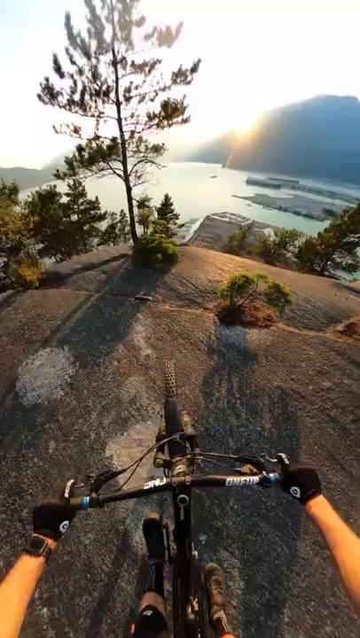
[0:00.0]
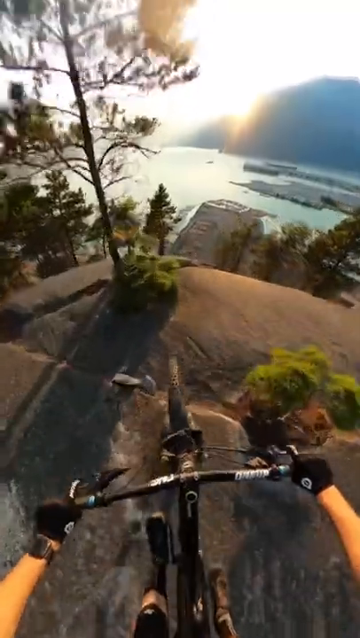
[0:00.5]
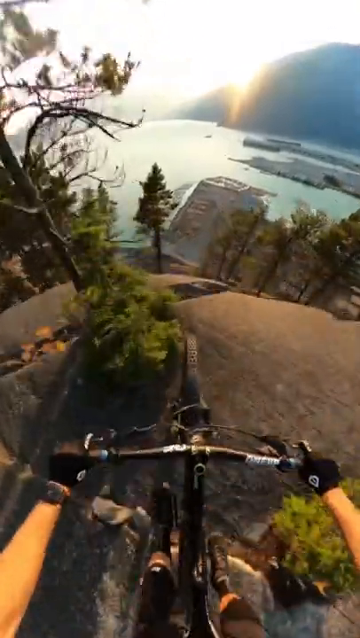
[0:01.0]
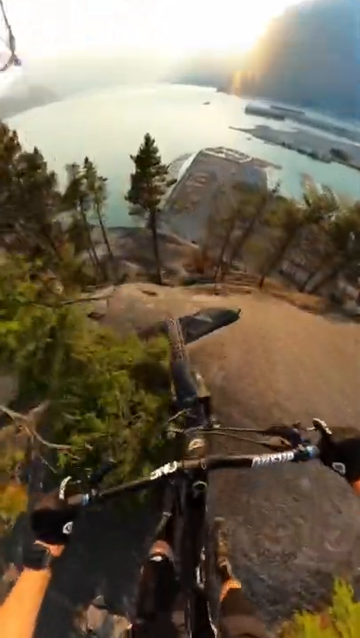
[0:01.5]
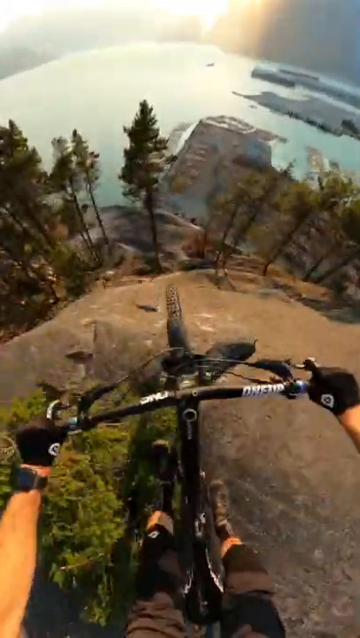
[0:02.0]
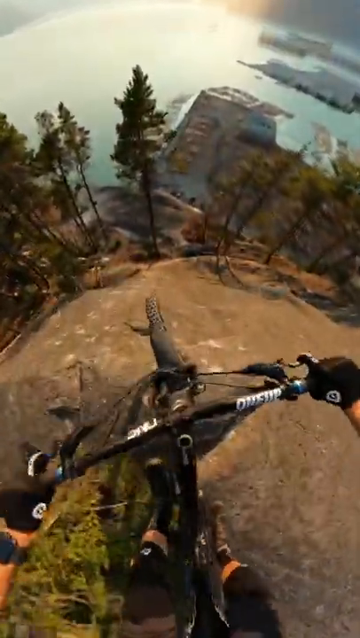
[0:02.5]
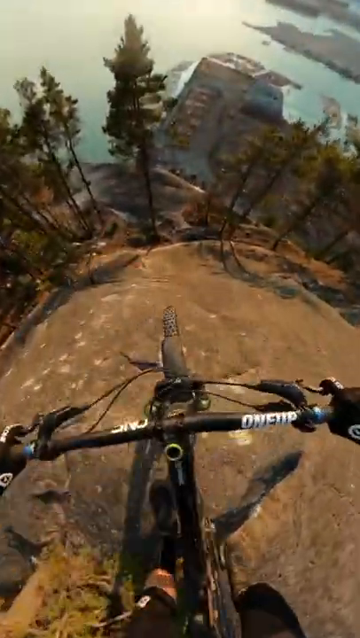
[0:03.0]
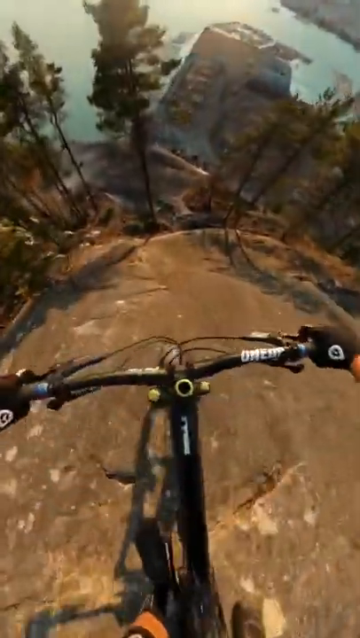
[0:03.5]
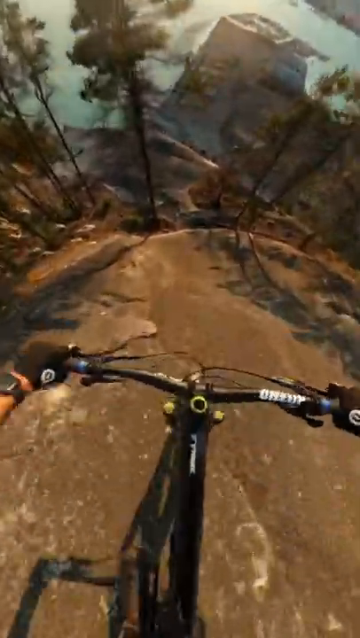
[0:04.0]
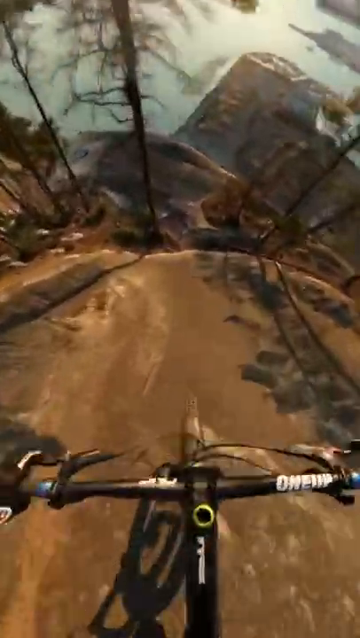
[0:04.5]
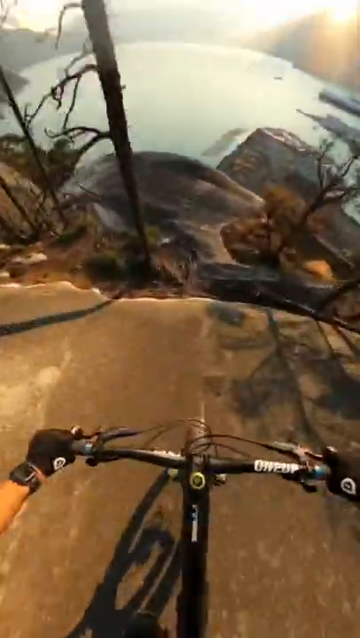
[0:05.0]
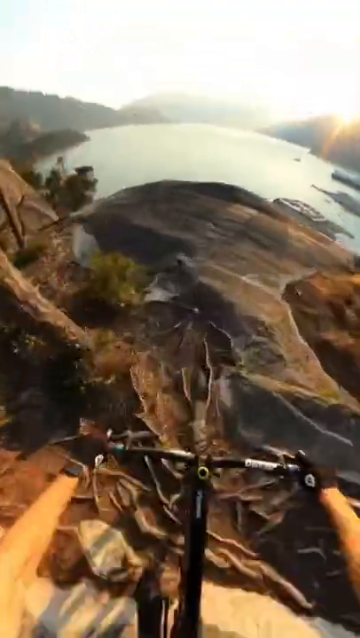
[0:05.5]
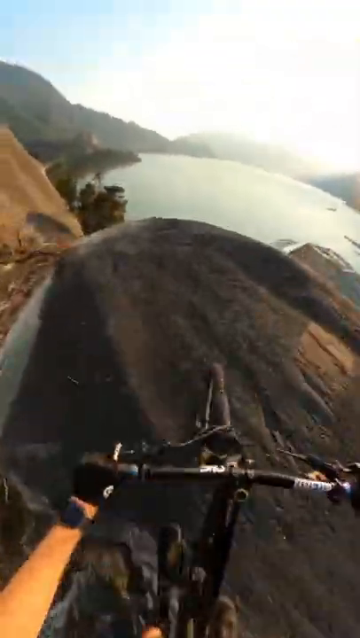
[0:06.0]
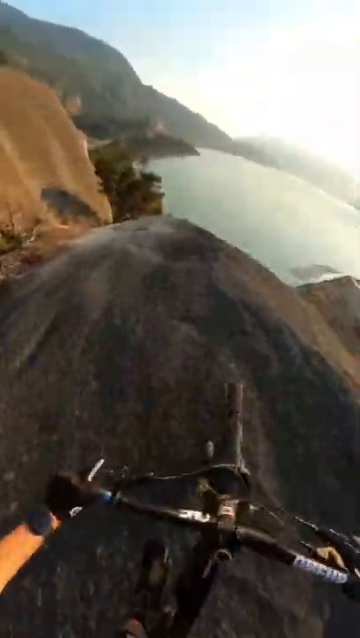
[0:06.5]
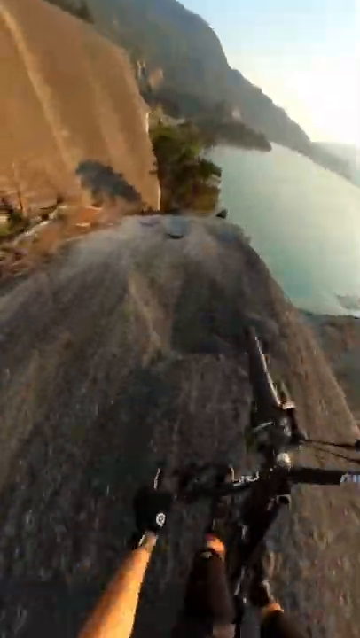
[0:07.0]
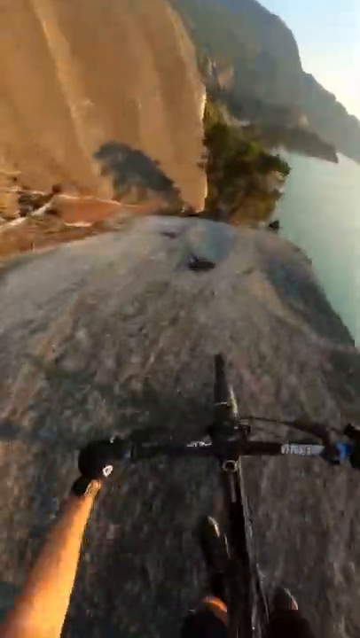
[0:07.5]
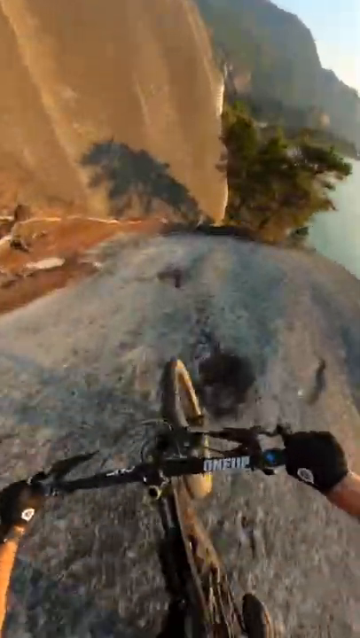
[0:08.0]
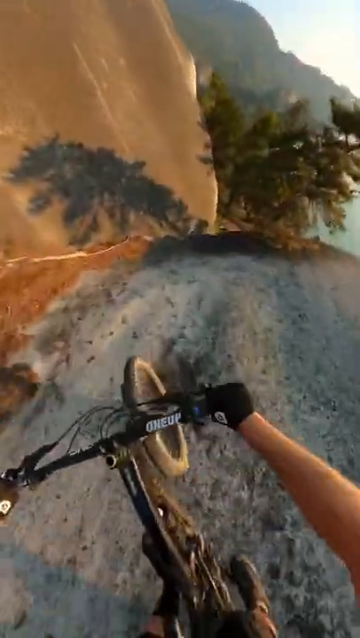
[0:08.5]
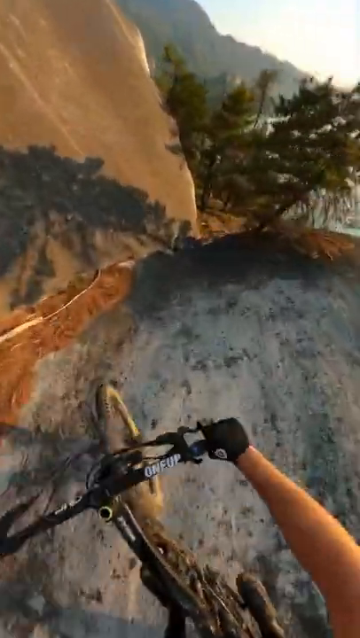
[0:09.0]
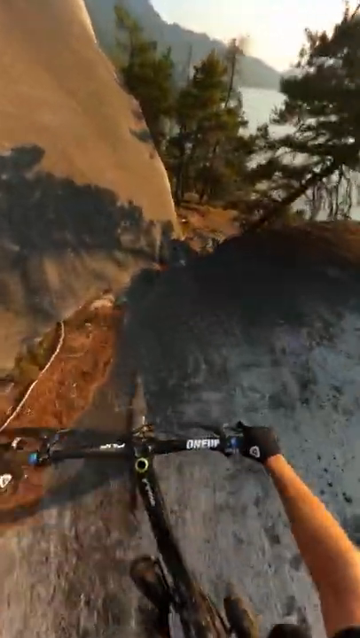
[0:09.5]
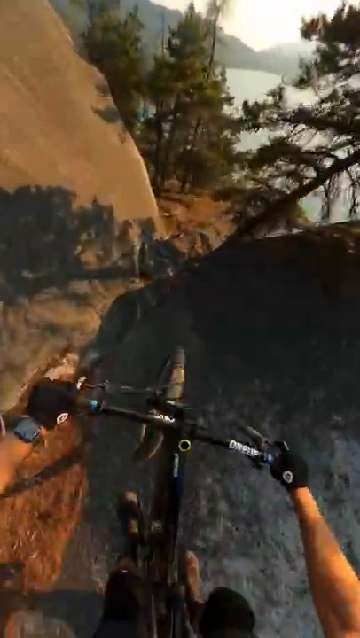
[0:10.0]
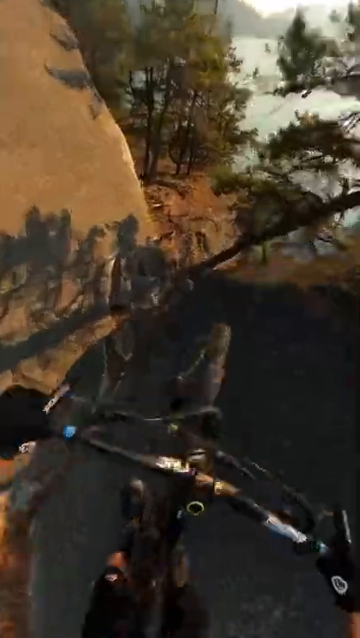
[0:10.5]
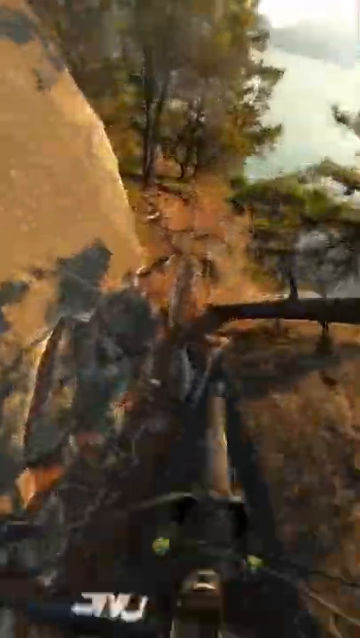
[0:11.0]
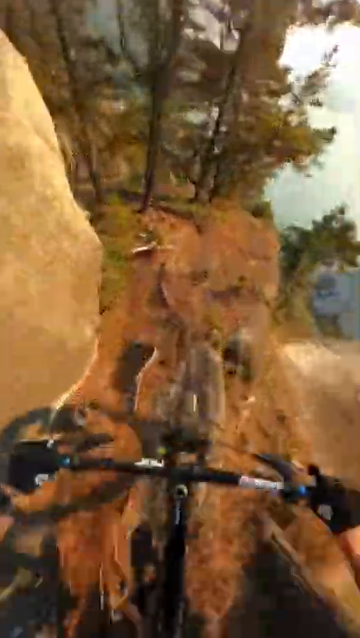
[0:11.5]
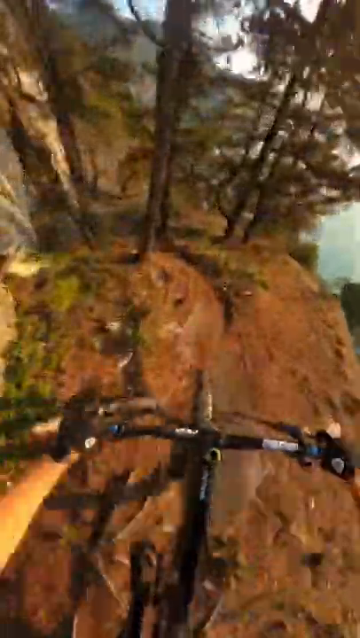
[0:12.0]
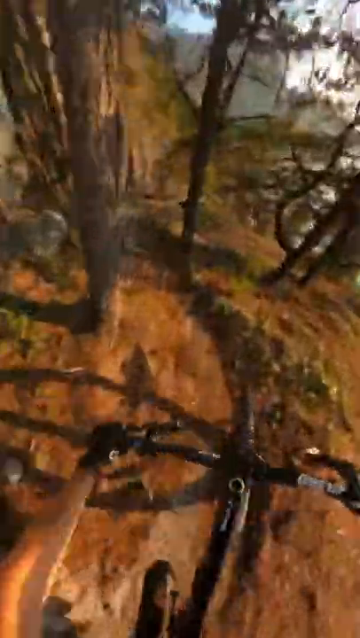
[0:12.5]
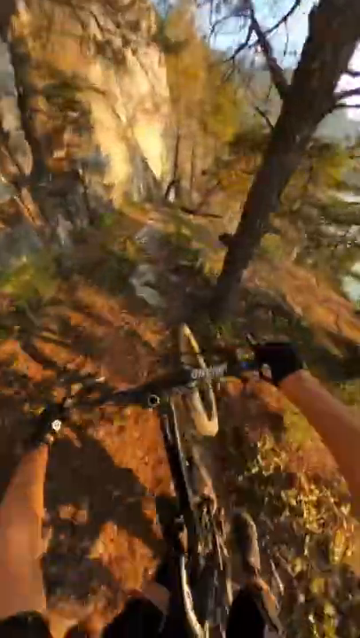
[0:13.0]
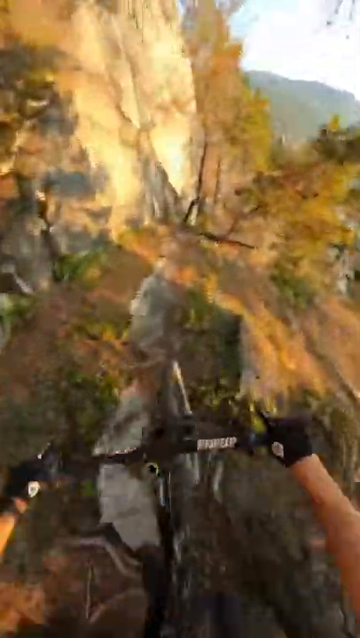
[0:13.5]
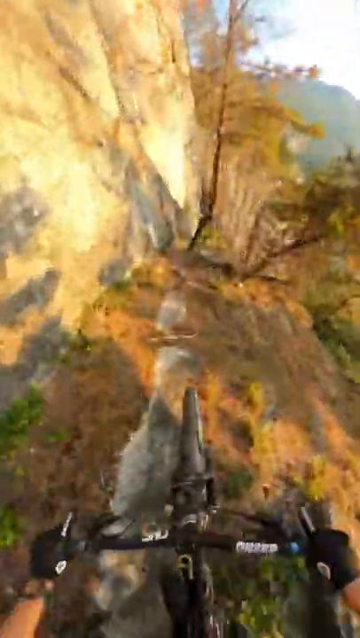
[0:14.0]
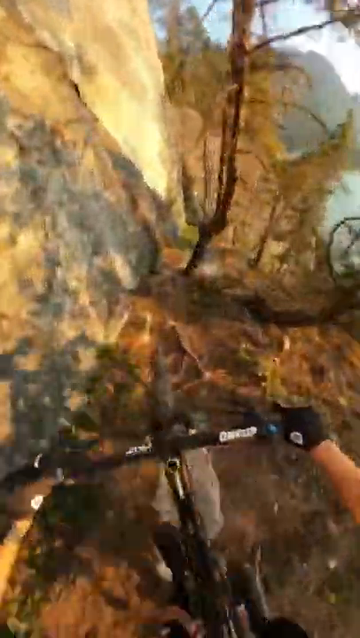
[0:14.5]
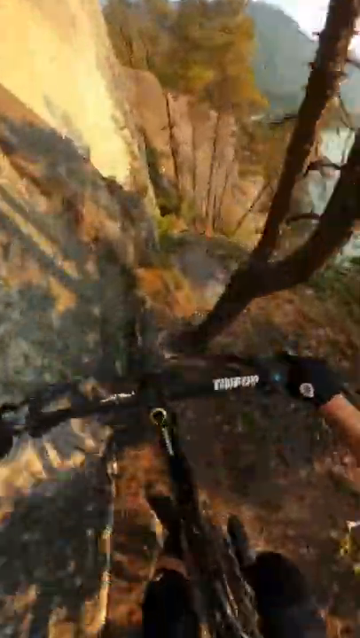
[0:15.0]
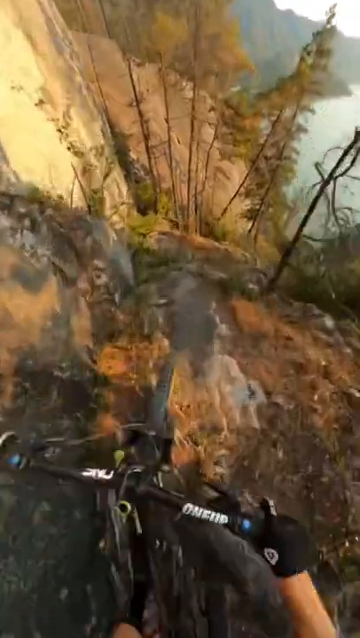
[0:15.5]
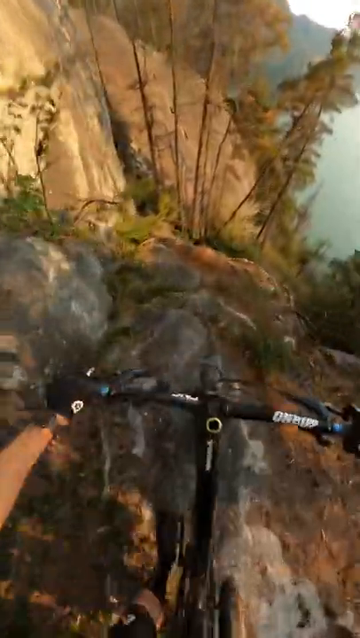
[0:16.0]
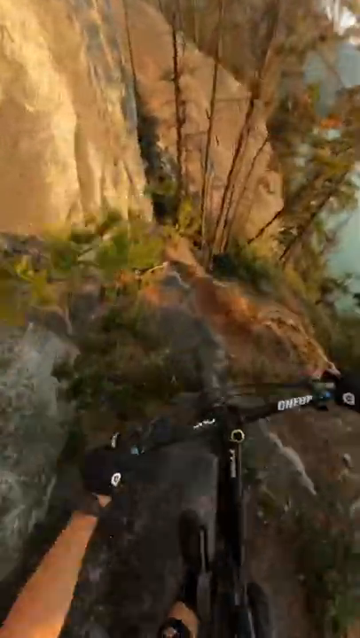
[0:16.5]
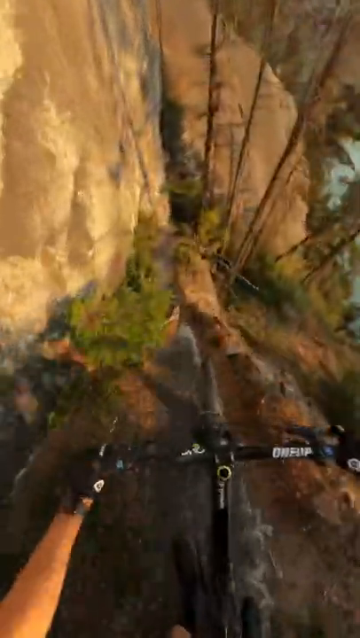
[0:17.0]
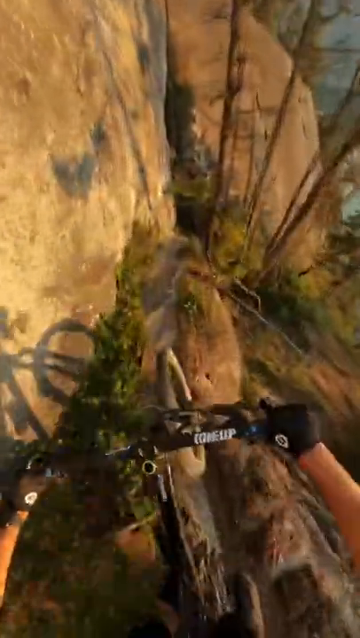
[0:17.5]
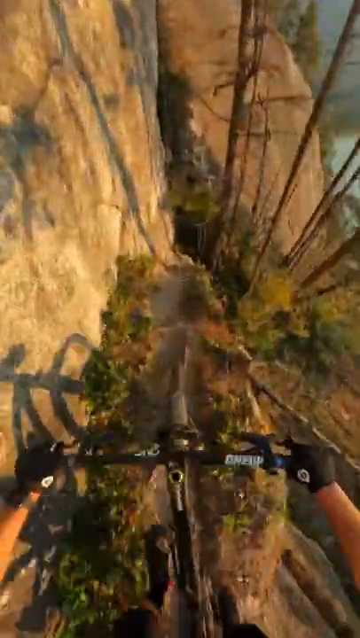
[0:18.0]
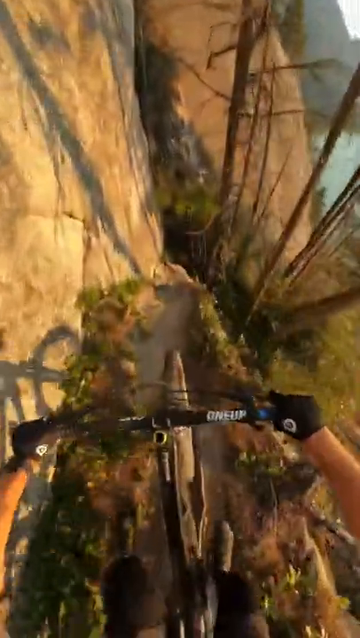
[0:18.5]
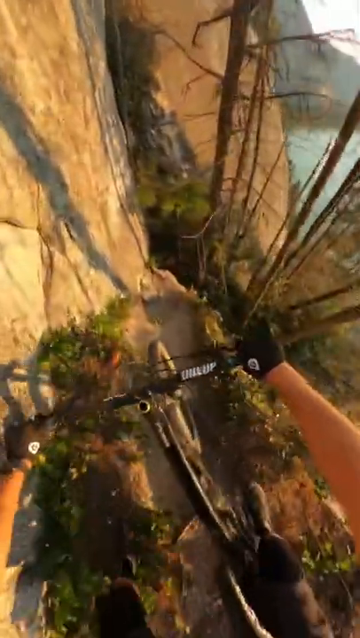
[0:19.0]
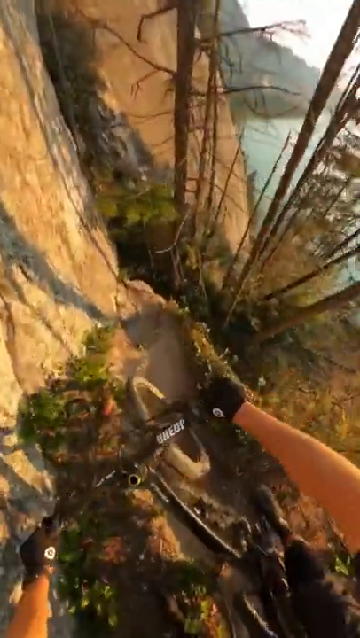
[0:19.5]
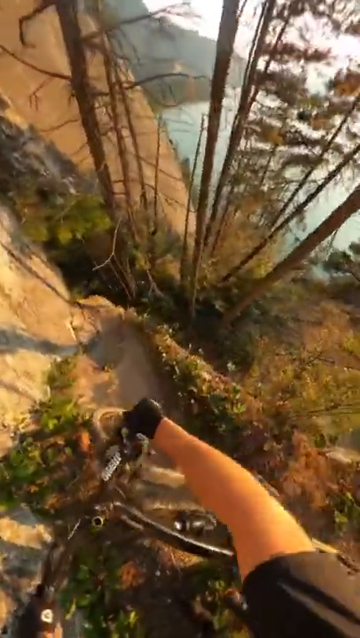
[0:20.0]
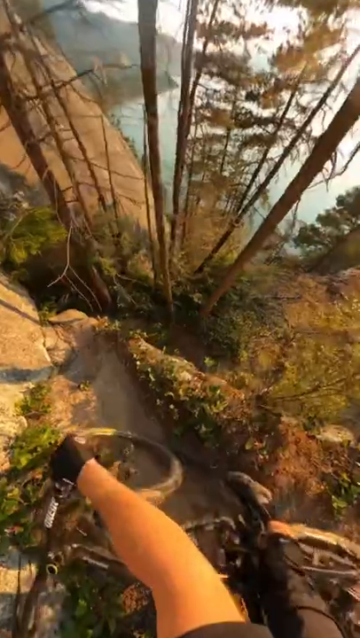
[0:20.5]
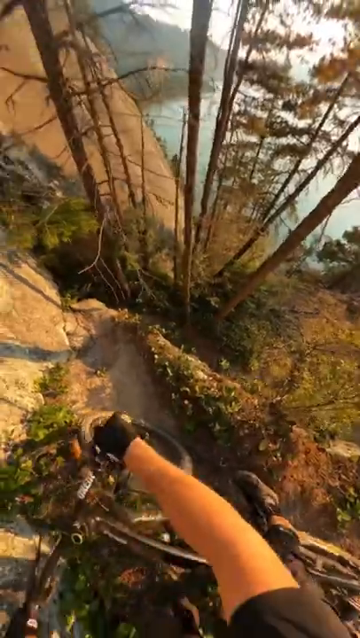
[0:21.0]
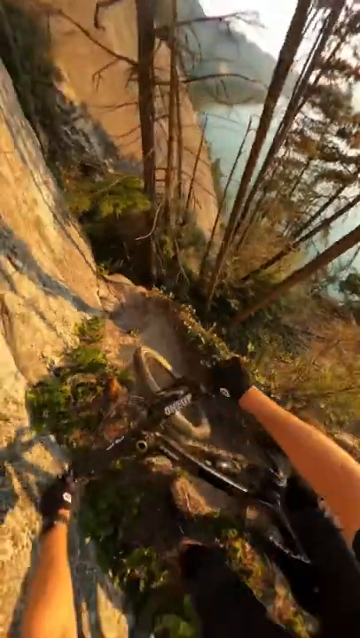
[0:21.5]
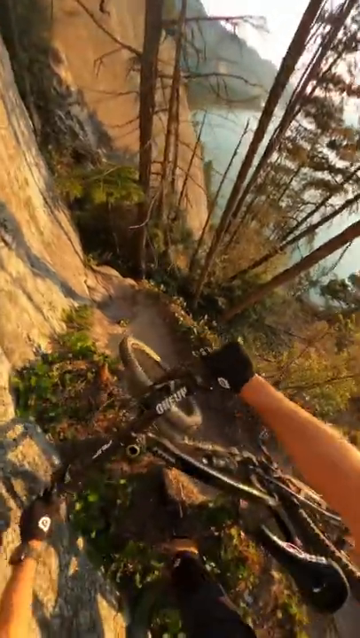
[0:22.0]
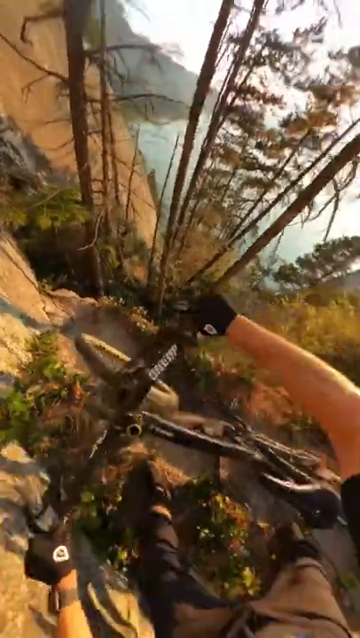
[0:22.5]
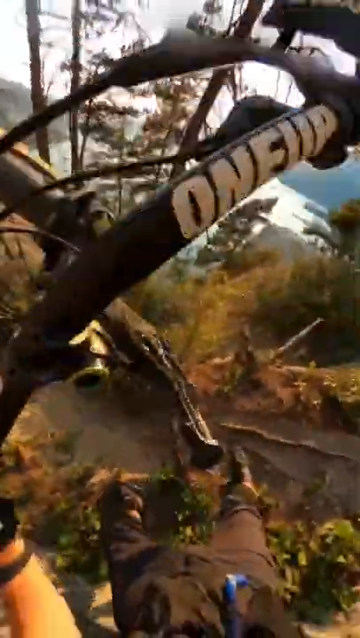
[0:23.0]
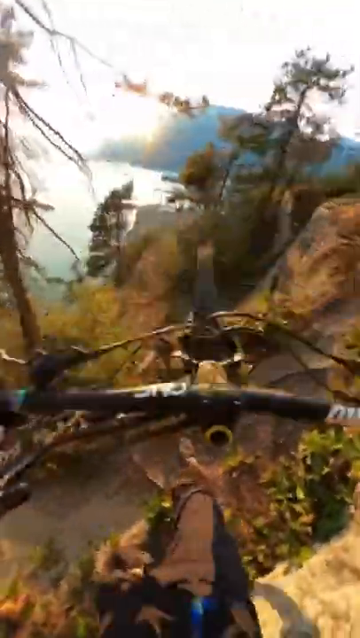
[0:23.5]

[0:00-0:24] A man rides a mountain bike on a mountain, seen entirely from a first-person view of what the biker sees: his hands on the handlebars of the bike. He rides down a rocky mountain with trees around. In the distance there seems to be a lake, and there is a far drop down. He traverses through the mountain and rides onto a dirt area with some bushes and trees, riding in between the mountain and the trees. He carefully goes down a narrow pathway. At the end of the video, he stops at the end where the drop is, gets off his bike, picks it up by its two handlebars, and starts walking back the other way. The background is a sunset, and the water is still and blue. It seems to be a beautiful day.